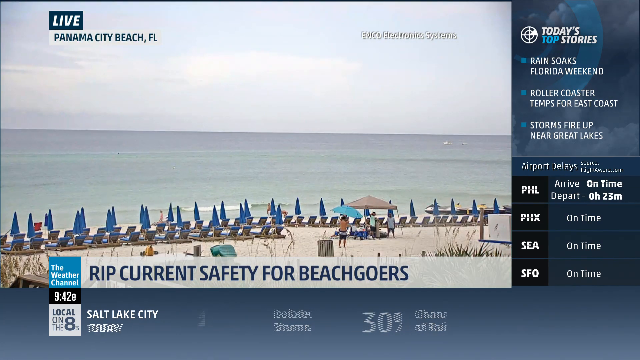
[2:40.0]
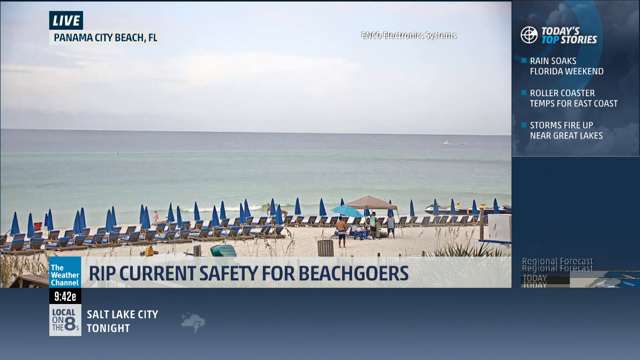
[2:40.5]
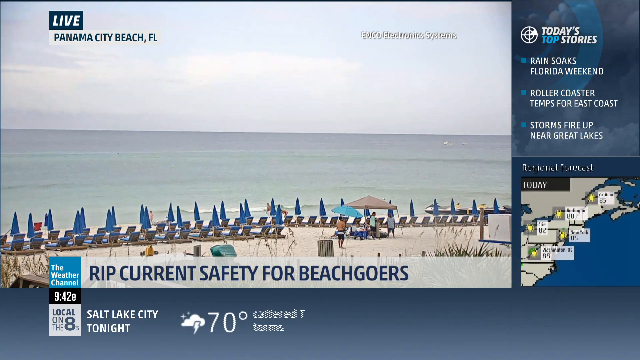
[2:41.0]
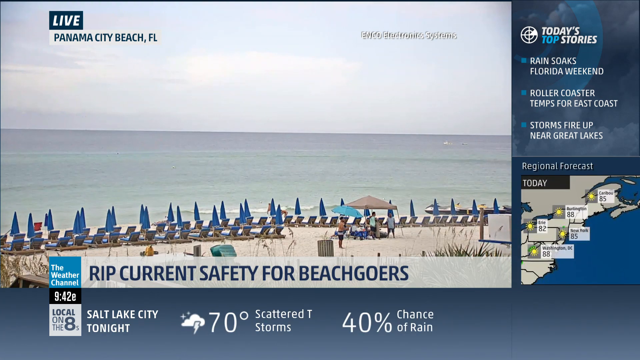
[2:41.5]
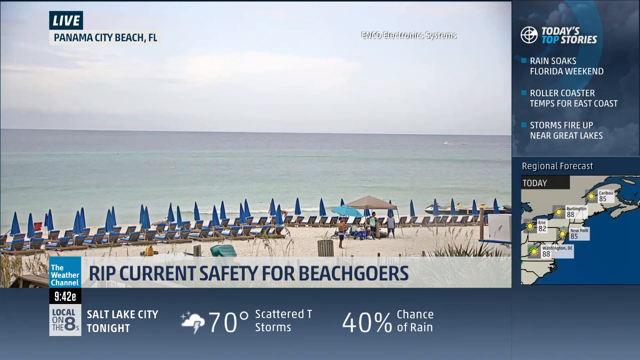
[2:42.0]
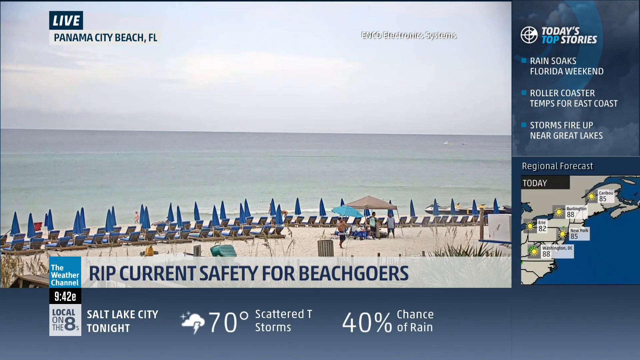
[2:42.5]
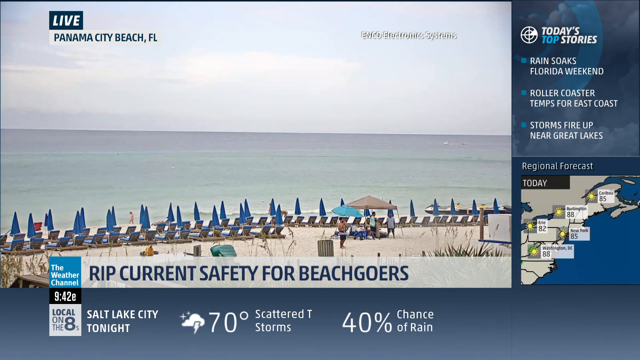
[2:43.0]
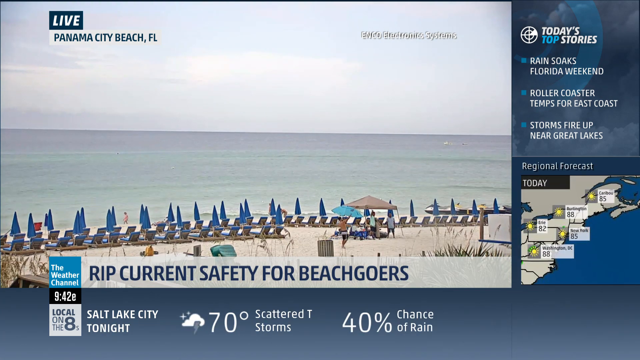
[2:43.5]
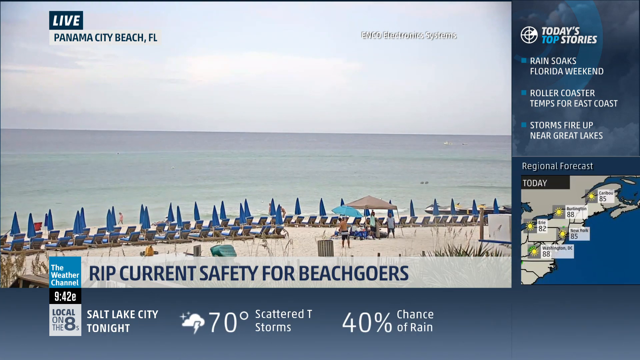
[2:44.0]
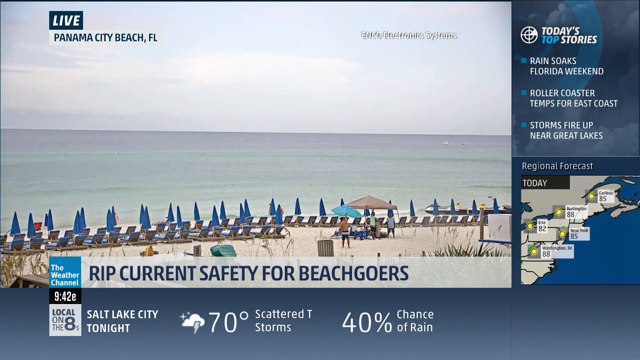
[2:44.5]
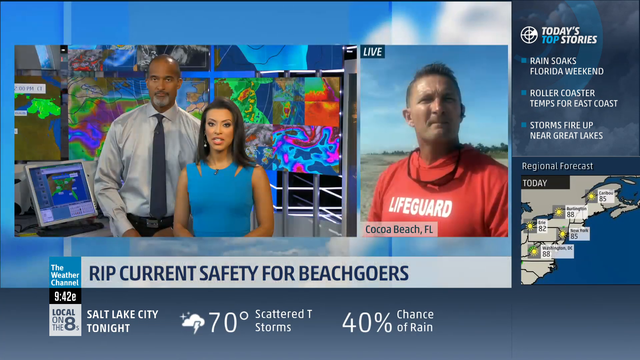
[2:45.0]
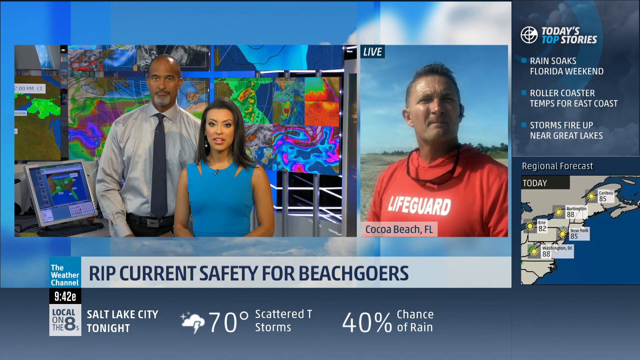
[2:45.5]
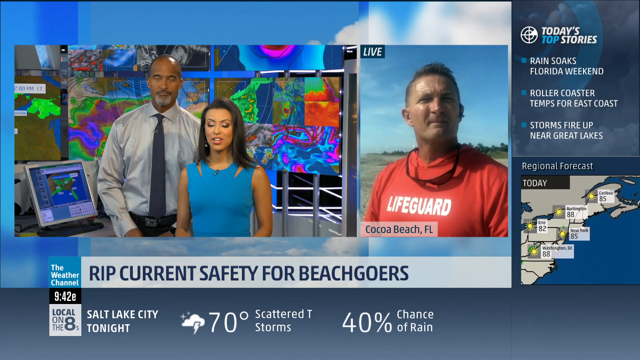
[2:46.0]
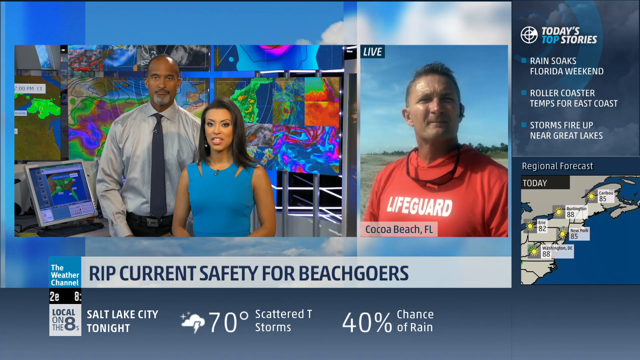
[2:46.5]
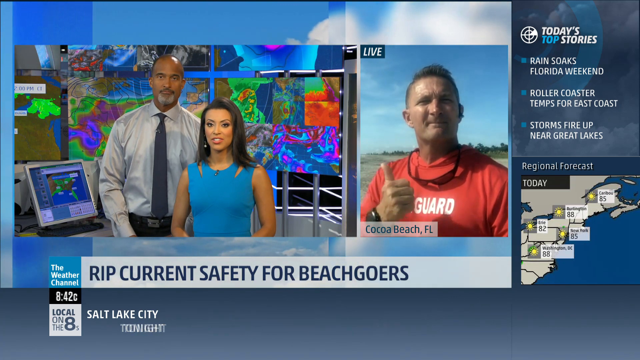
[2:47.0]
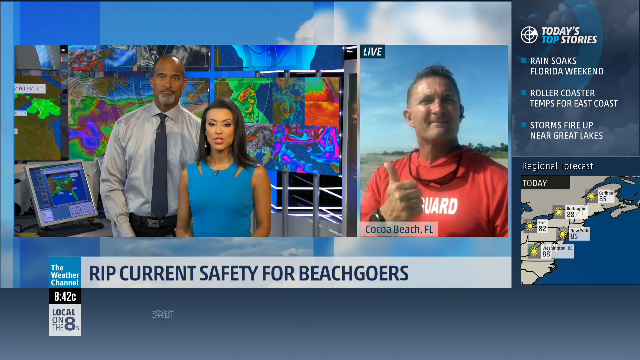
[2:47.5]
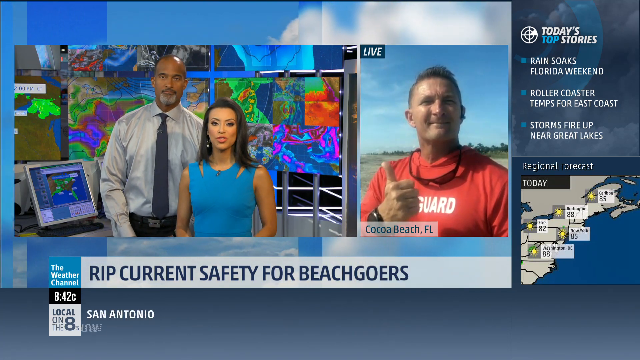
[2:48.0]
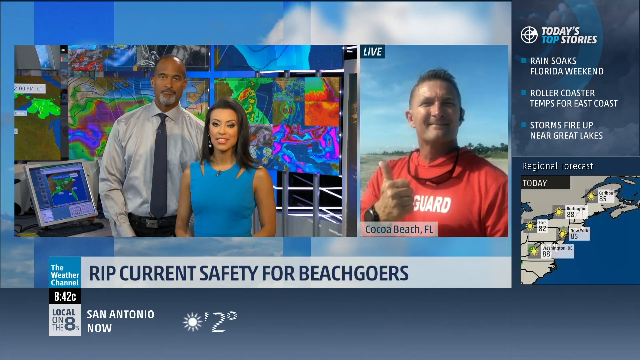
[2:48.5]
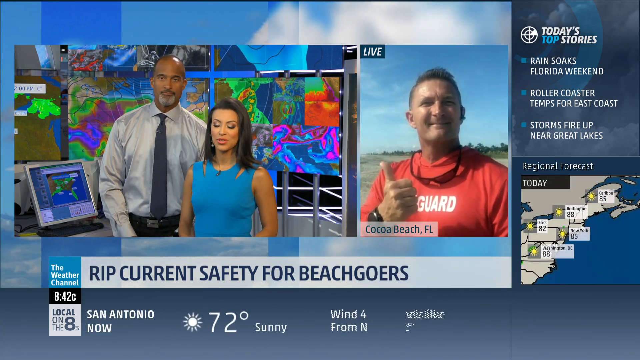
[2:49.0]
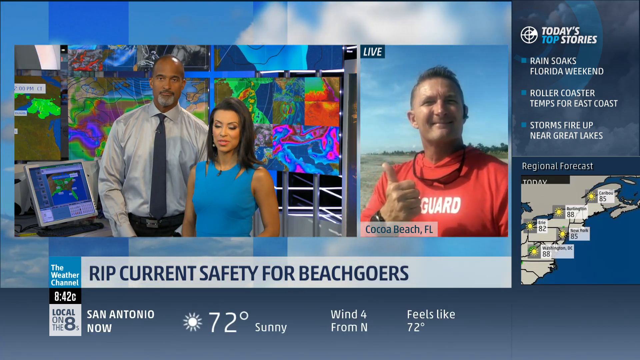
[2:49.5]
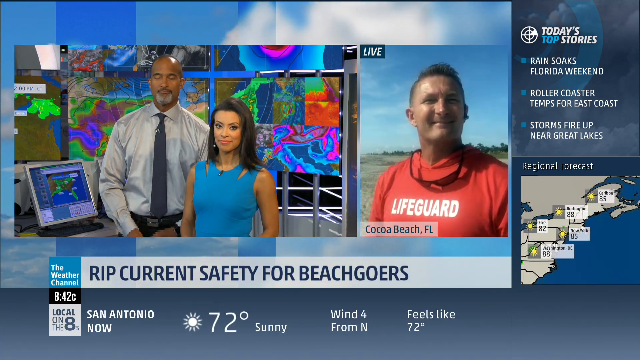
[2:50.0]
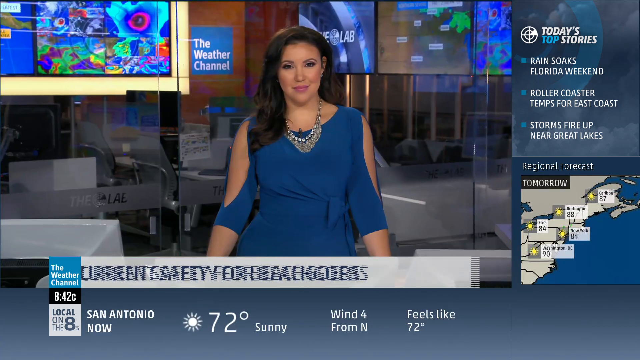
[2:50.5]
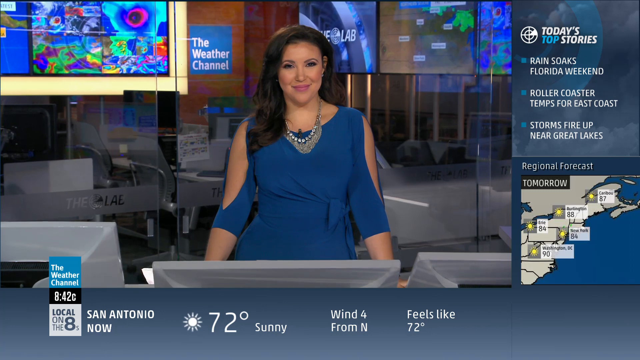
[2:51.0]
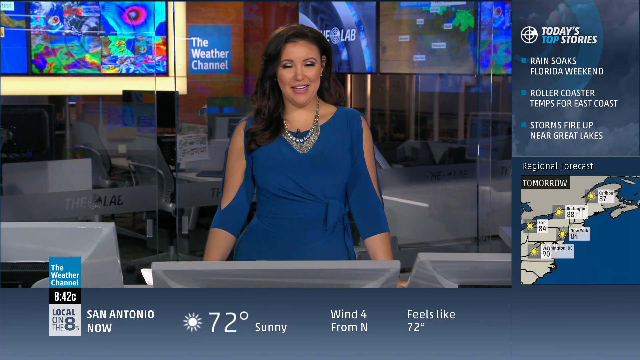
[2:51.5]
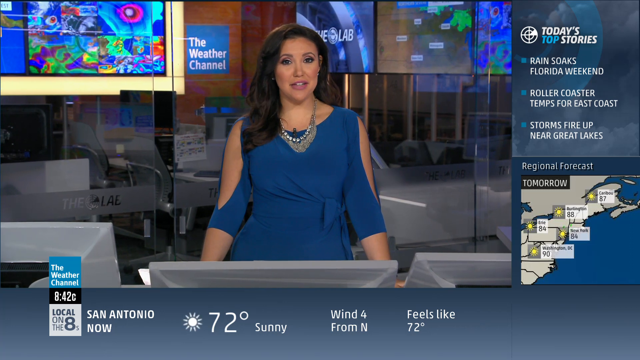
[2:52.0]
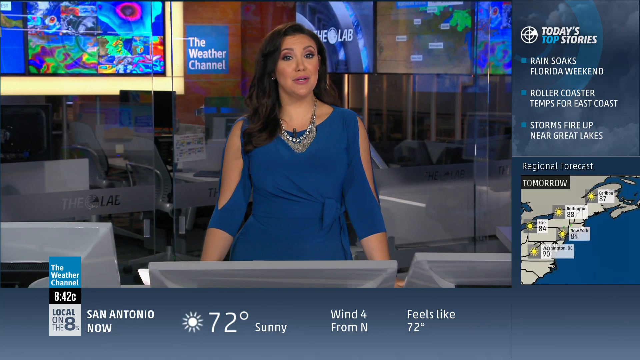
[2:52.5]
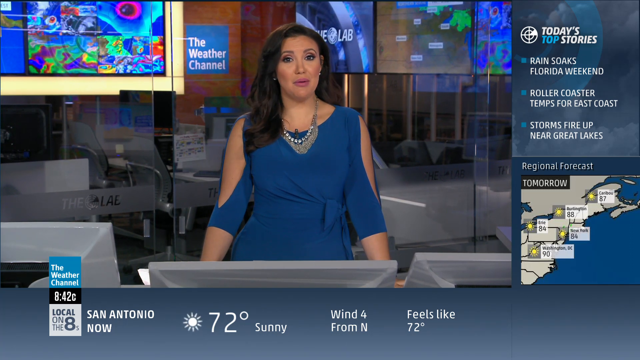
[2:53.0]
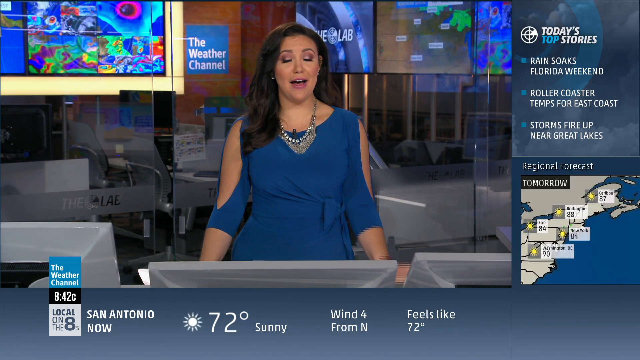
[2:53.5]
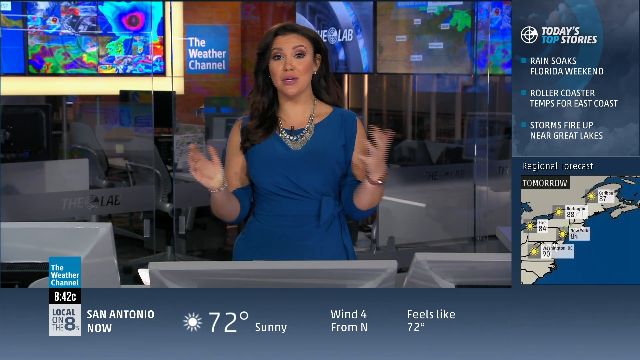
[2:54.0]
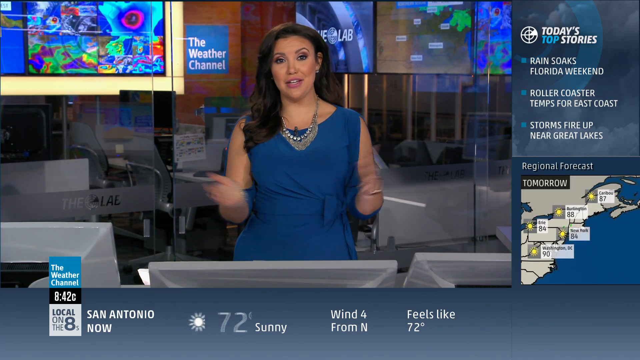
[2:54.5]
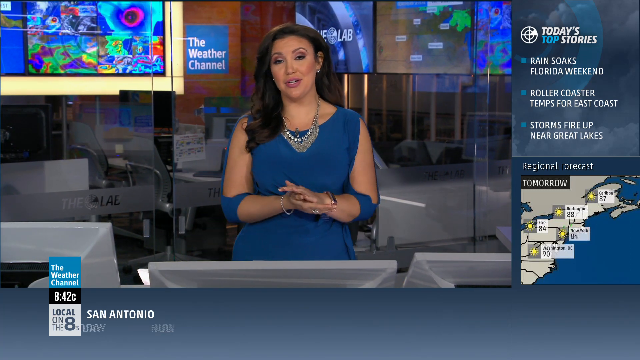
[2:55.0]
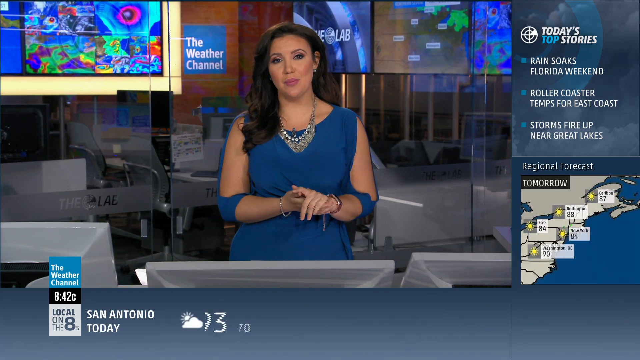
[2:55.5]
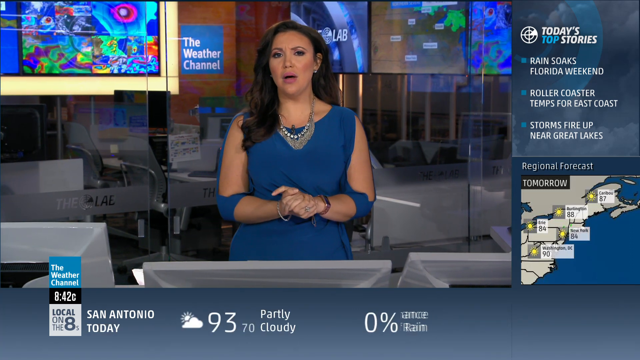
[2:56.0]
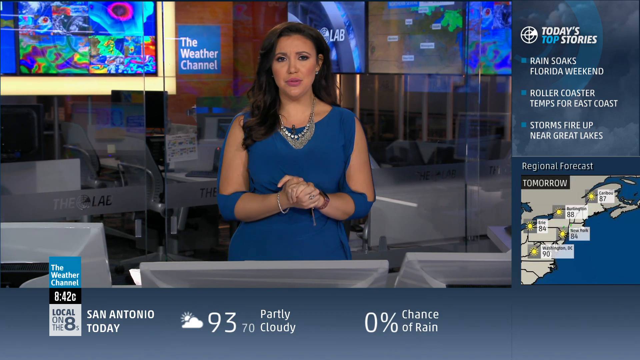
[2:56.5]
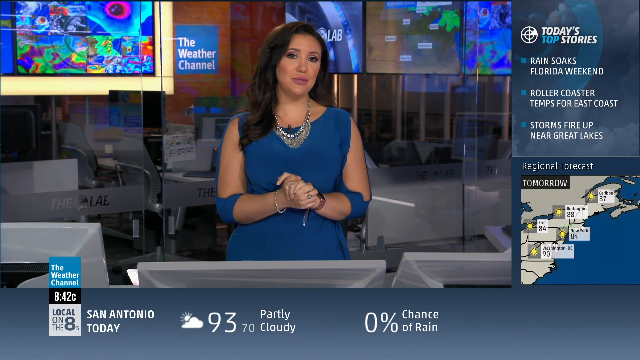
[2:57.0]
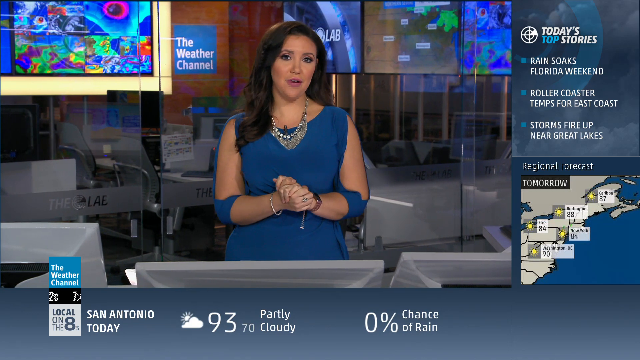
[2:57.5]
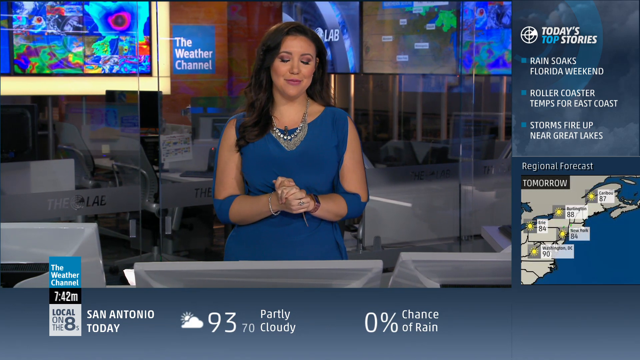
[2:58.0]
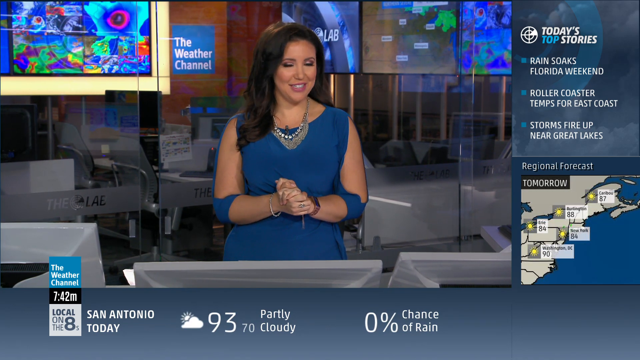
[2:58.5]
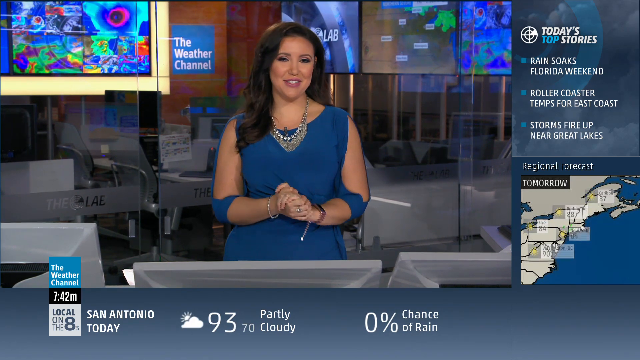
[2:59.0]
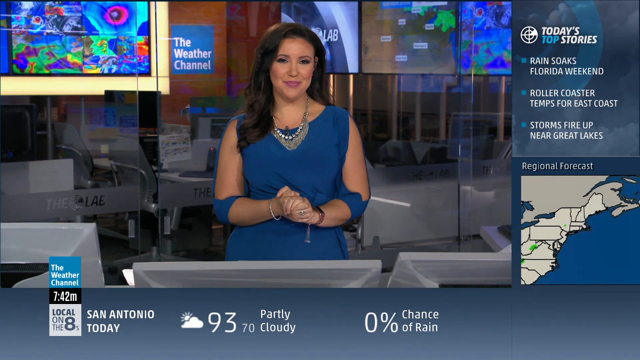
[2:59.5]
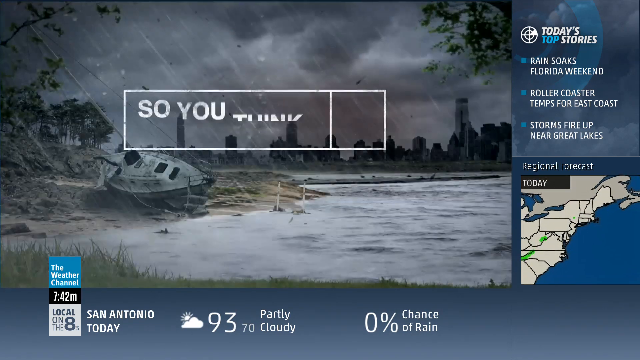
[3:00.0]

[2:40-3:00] The Weather Channel piece is titled "Rip current safety for beachgoers," live from Panama City Beach, Florida. Two newscasters in a newsroom have screens behind them showing the weather forecast and pattern simulations. They talk remotely to a lifeguard at Cocoa Beach, Florida, who has his thumb up. Then another newscaster in a blue dress talks to the camera. In the upper right, today's top stories read "Rain soaks Florida weekend," "Rollercoaster temps for East Coast," and "storms fire up near Great Lakes." Below that, airport delays show PHL arriving on time and departing at 0 hours 23 minutes, PHX on time, CEA on time, and SFO on time. A regional forecast lists Erie 22, Burlington 88, Caribou 87, New York 84, and Washington, DC 90.